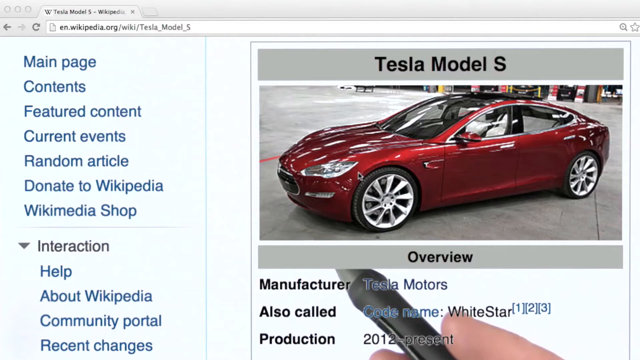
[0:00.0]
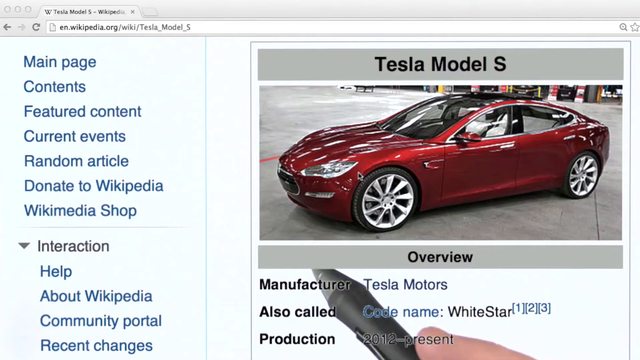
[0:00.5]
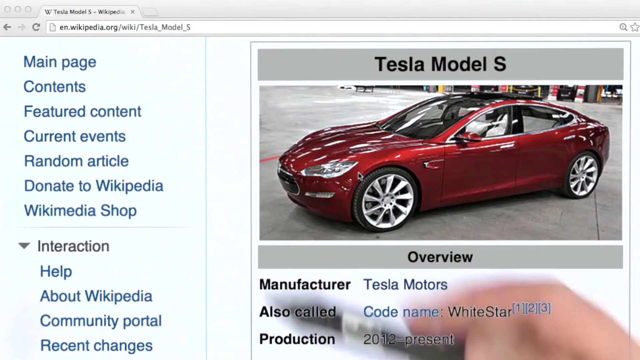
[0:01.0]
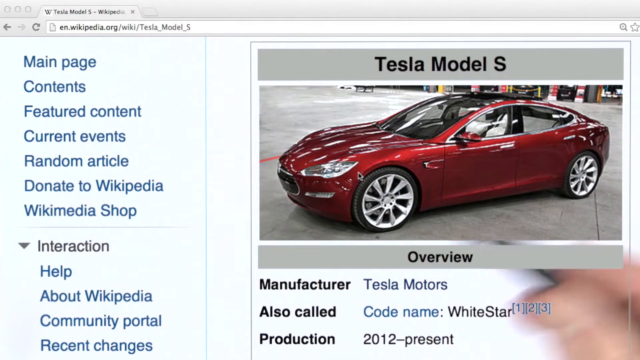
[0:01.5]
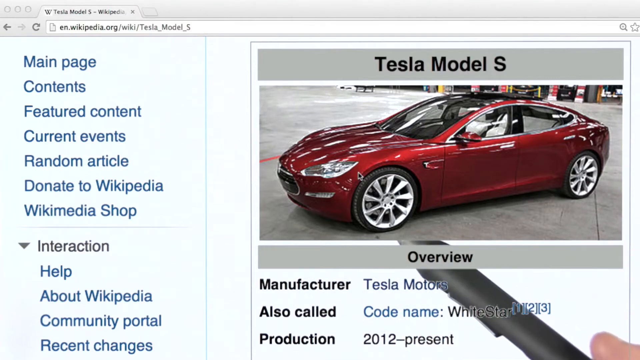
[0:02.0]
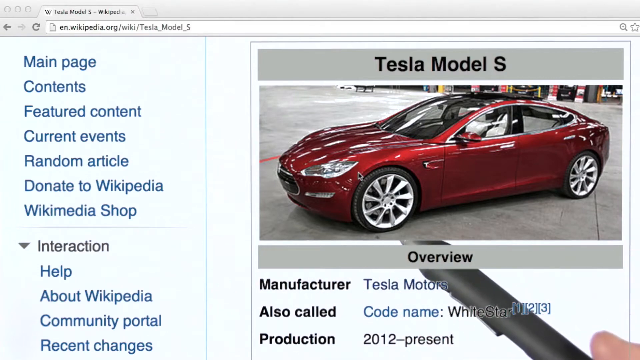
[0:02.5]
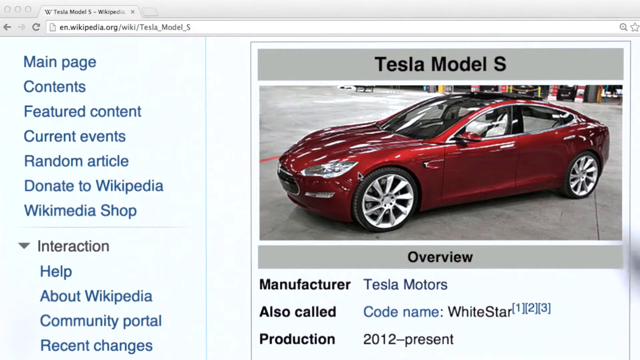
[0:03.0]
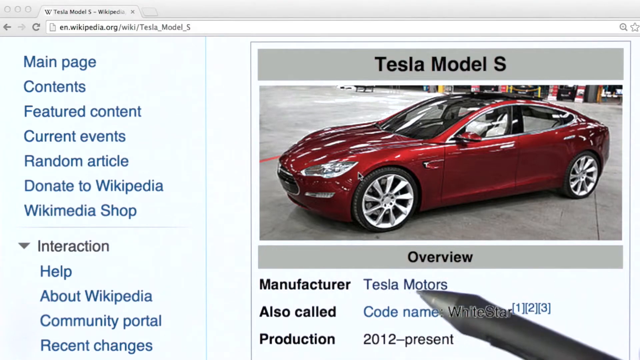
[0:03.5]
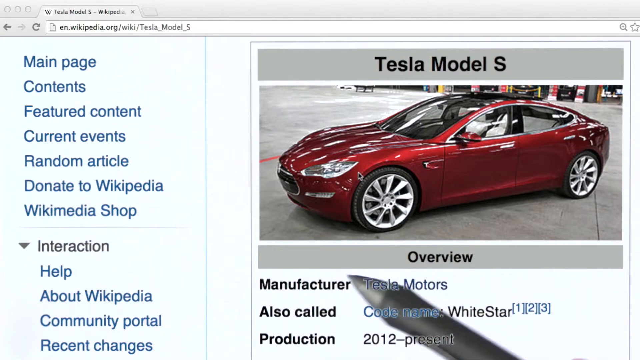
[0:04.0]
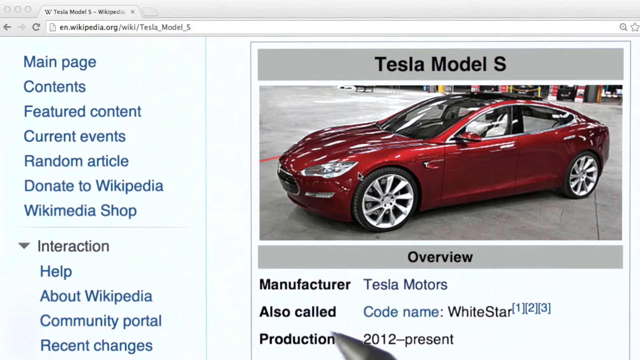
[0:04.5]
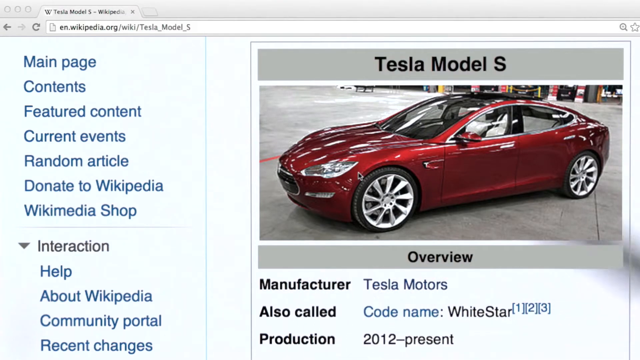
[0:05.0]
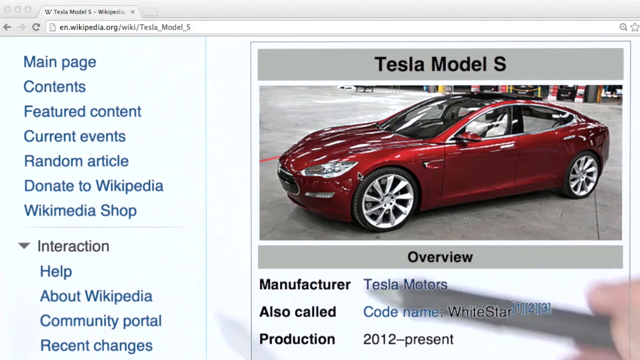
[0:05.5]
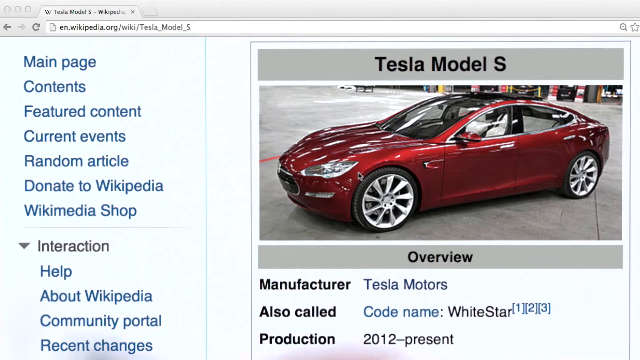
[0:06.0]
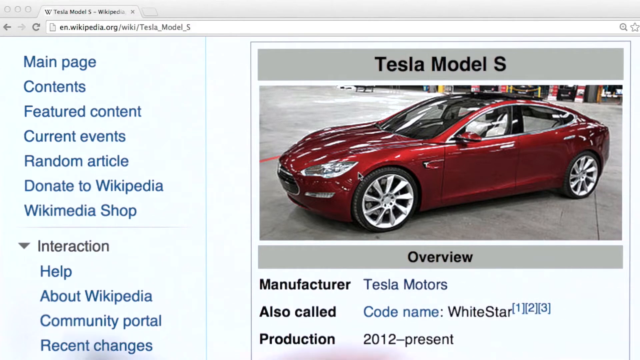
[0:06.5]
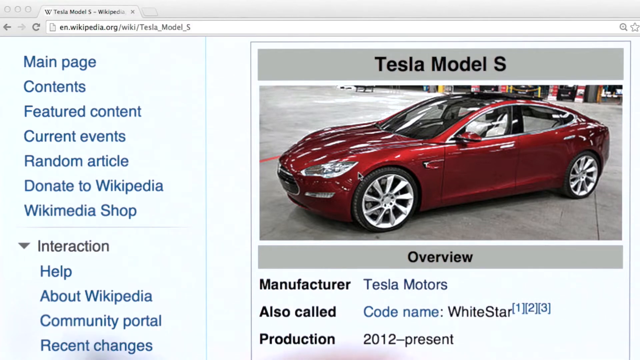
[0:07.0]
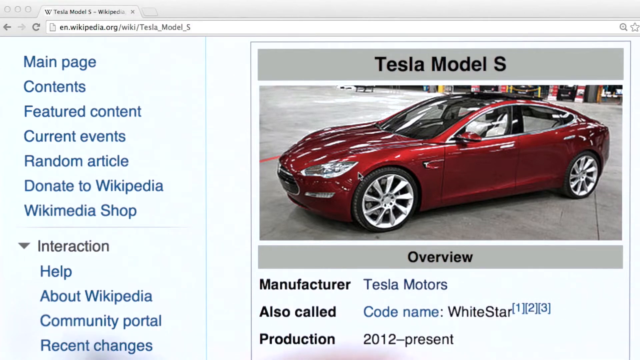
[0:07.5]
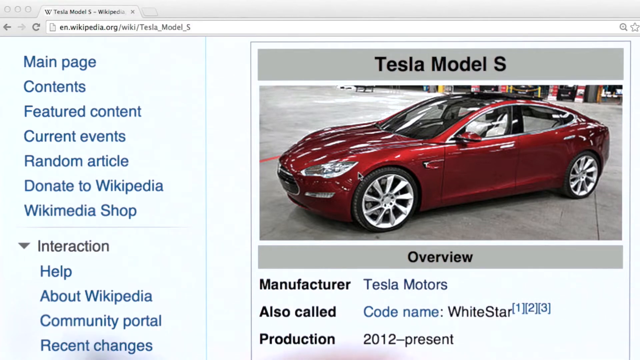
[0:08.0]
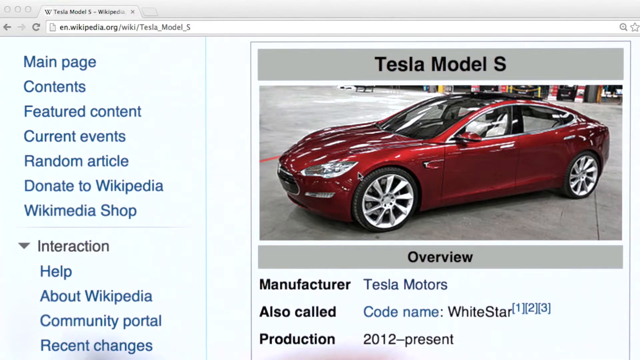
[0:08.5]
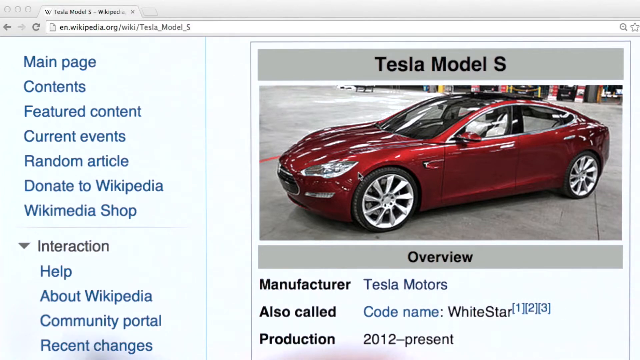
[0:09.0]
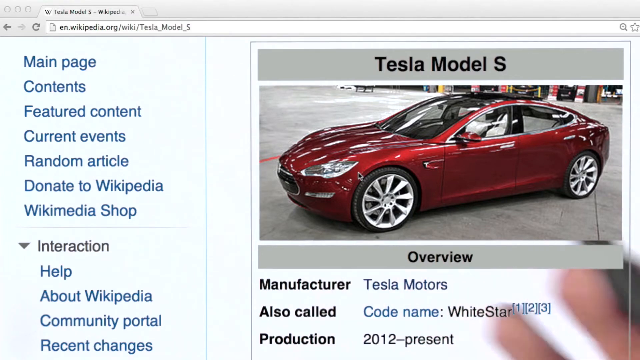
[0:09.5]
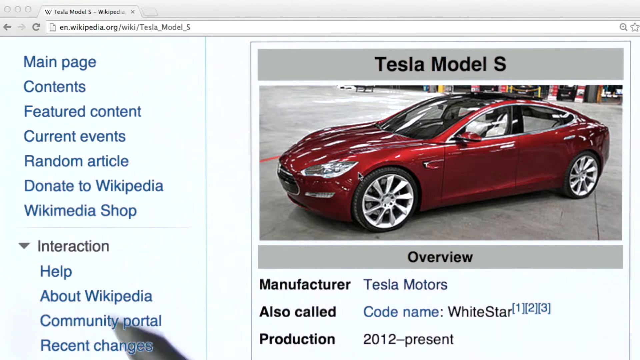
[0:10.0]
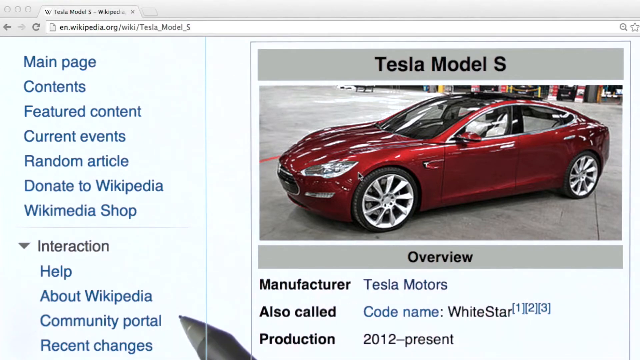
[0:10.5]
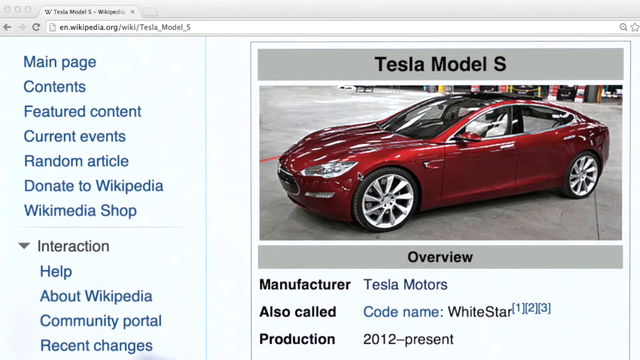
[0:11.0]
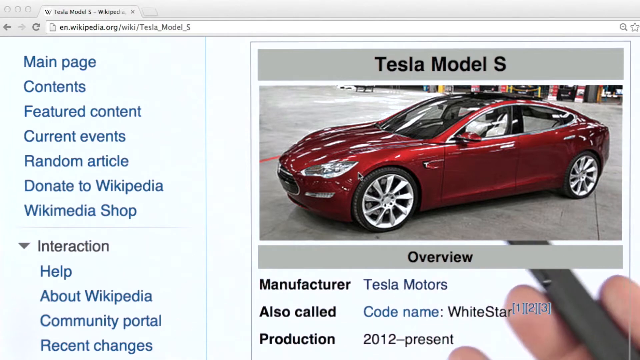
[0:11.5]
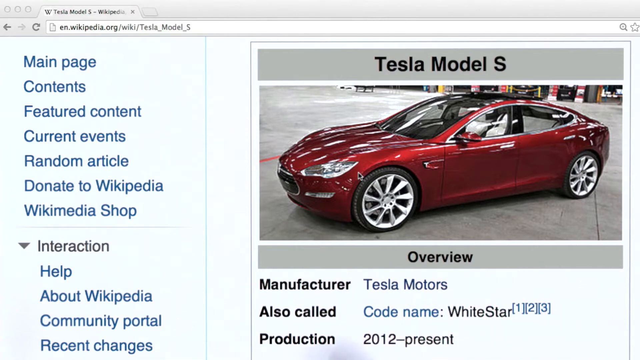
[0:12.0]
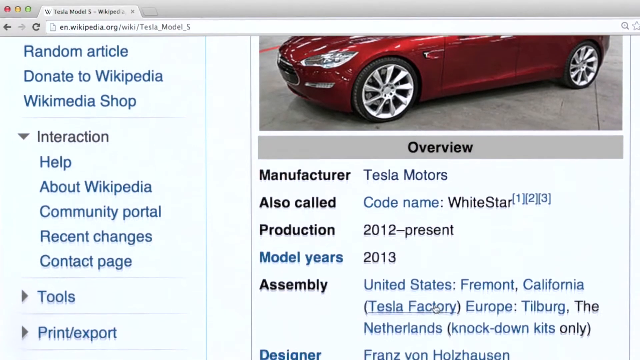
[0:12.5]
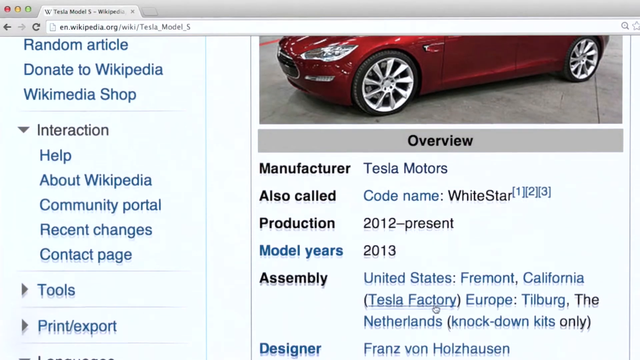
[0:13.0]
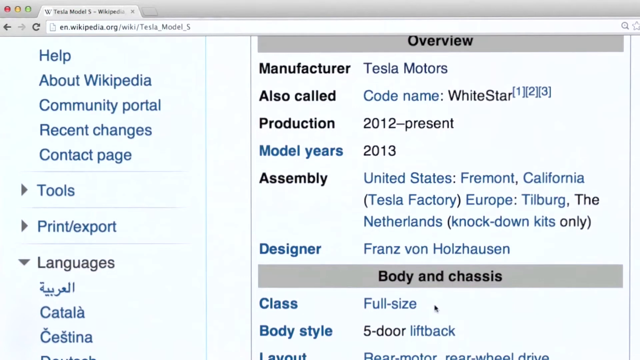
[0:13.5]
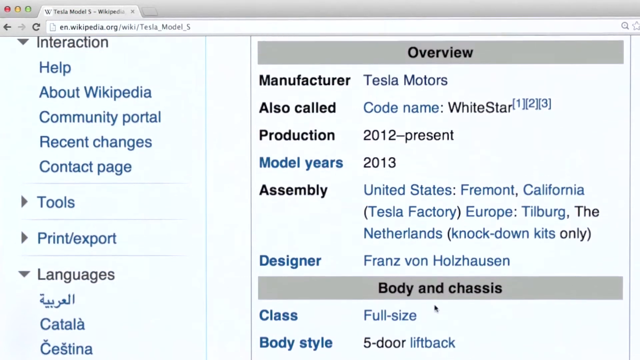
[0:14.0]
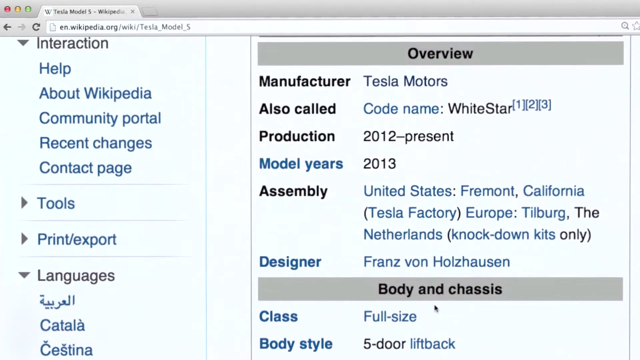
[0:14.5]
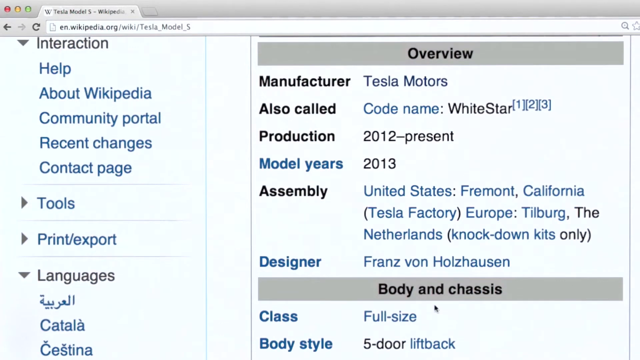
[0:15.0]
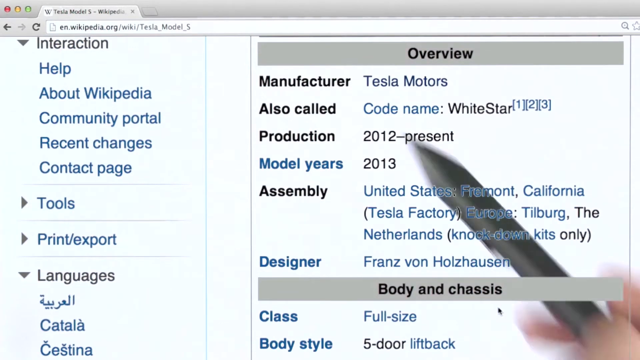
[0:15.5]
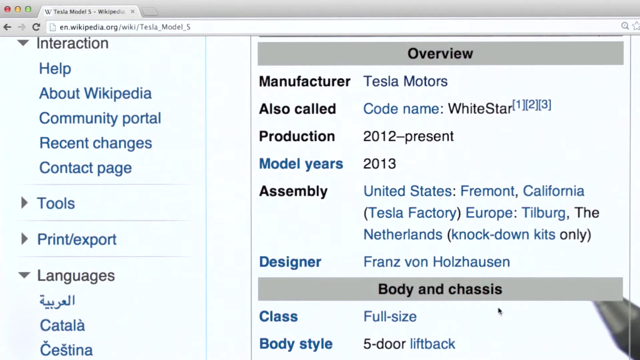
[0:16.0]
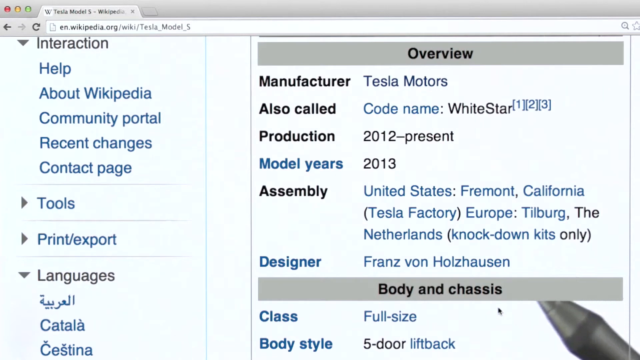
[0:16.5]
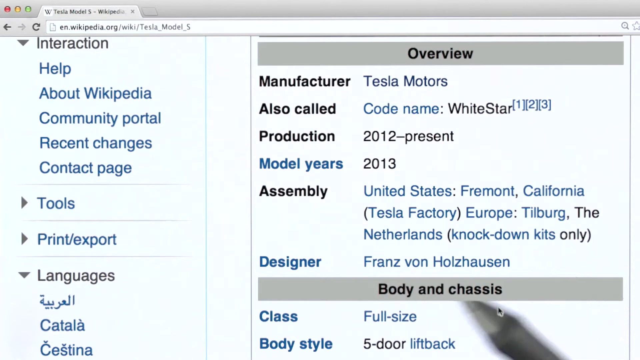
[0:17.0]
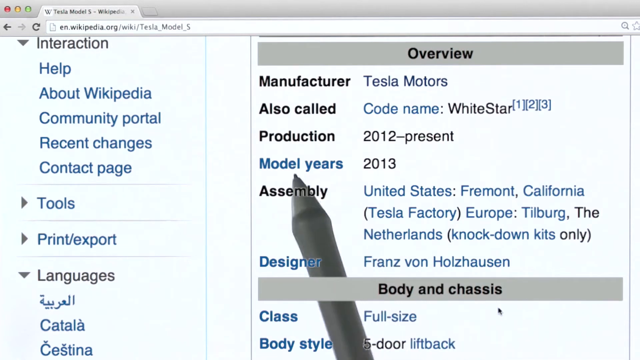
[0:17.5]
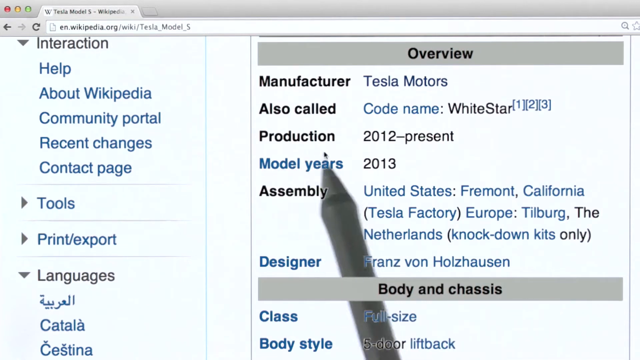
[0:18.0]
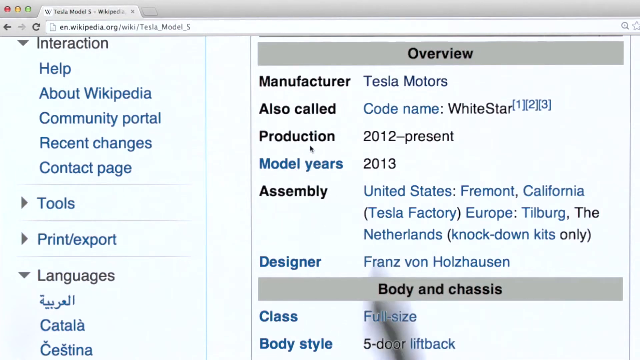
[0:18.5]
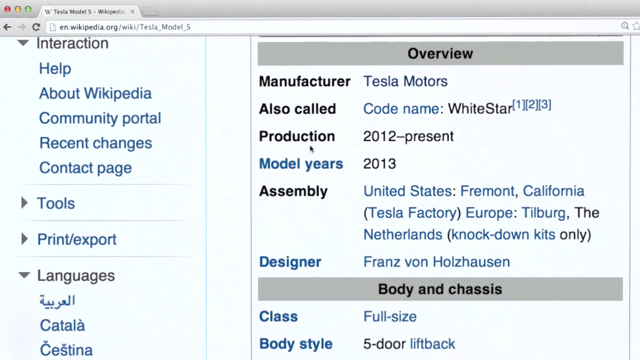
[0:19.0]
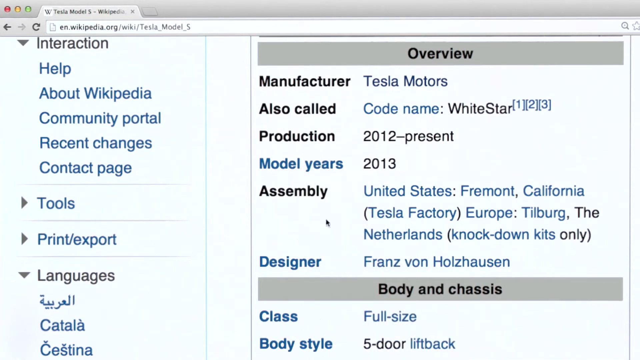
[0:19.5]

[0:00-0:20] What appears to be a car-themed web page is on screen. On the right side is an image of a Tesla Model S, with "Tesla Model S" written above the vehicle. The car looks to be a kind of metallic red, a four-door, sedan-style vehicle. On the left side of the page are options reading "main page", "contents", "feature content", "current events", "random article", "donate to Wikipedia" and "Wikipedia shops", so this is apparently the Wikipedia page for the vehicle. Below the vehicle, under "overview", it reads "manufacturer Tesla Motors", "also called", "codename White Star". Somebody points at the screen with a pen or stylus. The person interacting with the page scrolls down, revealing more information: "production 2012 to present", "model year 2013", "assembly United States, Fremont, California, Europe, Tilburg, the Netherlands" and "designer Franz von Holzhausen".